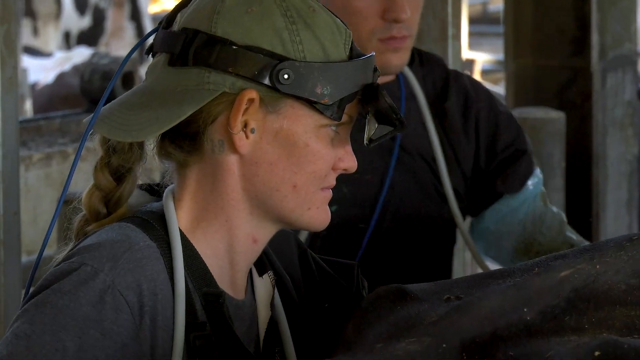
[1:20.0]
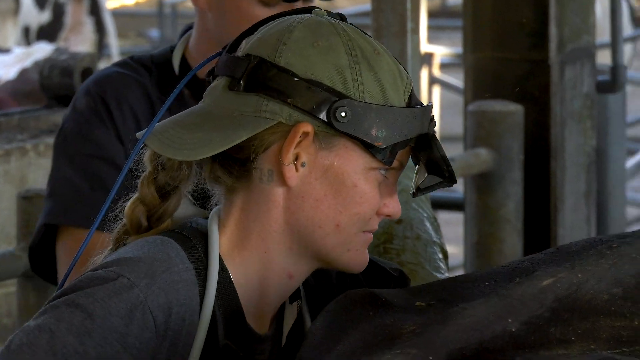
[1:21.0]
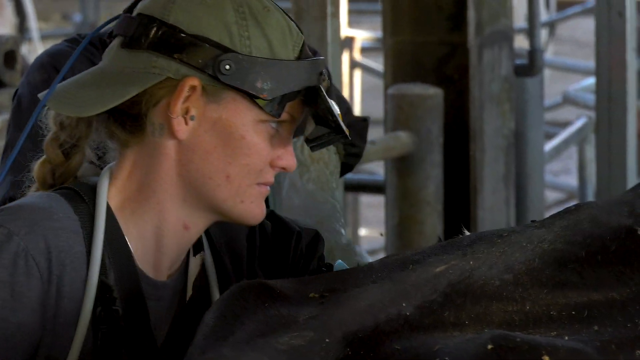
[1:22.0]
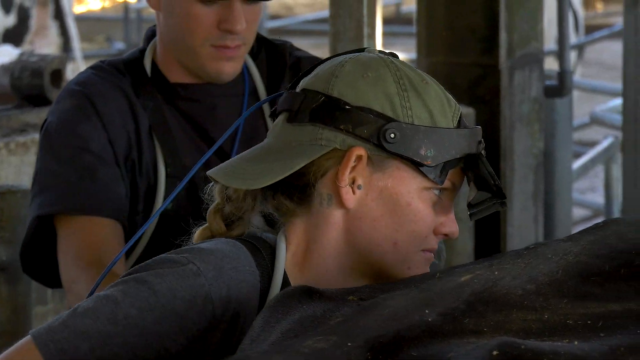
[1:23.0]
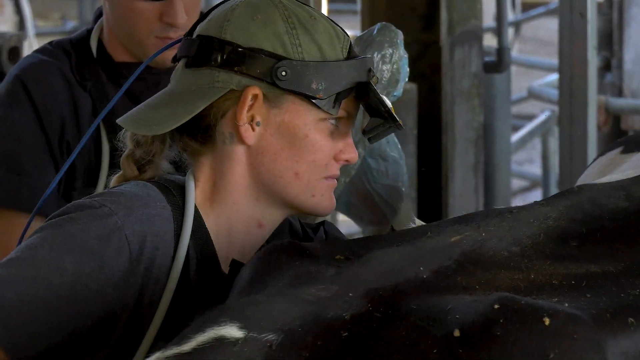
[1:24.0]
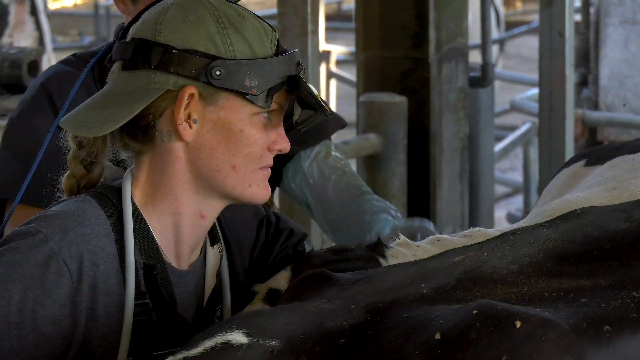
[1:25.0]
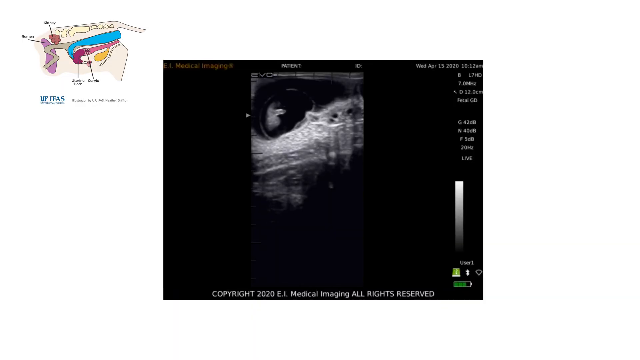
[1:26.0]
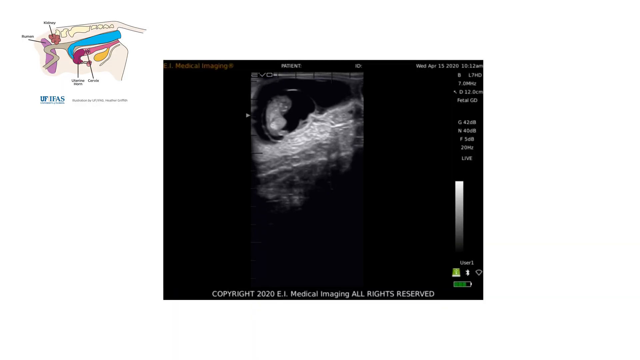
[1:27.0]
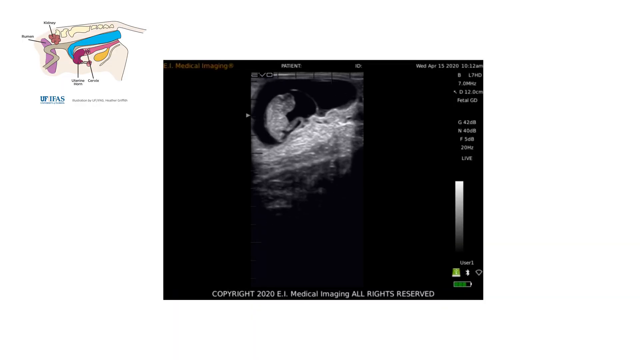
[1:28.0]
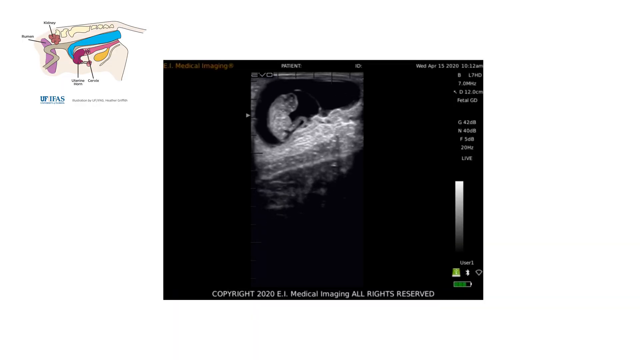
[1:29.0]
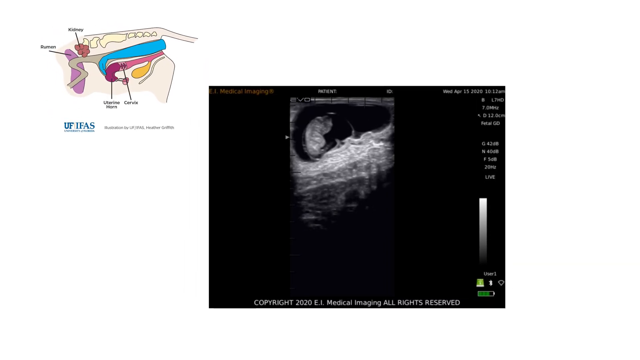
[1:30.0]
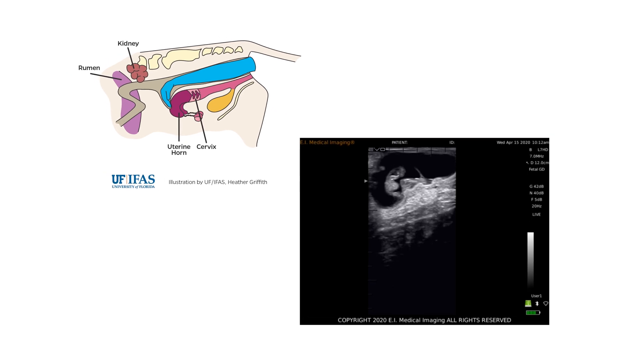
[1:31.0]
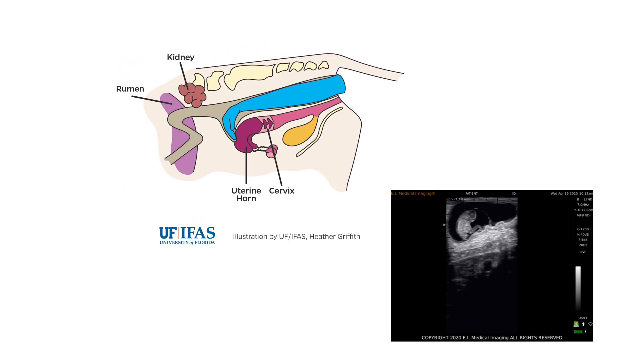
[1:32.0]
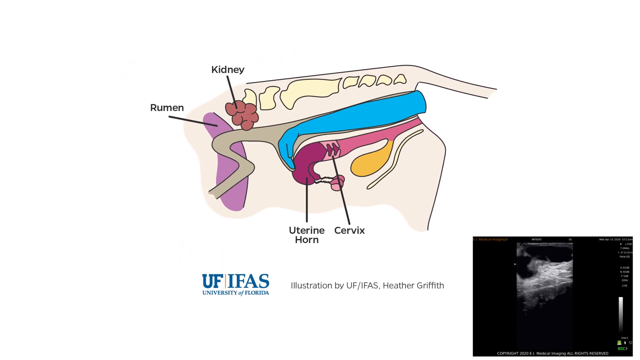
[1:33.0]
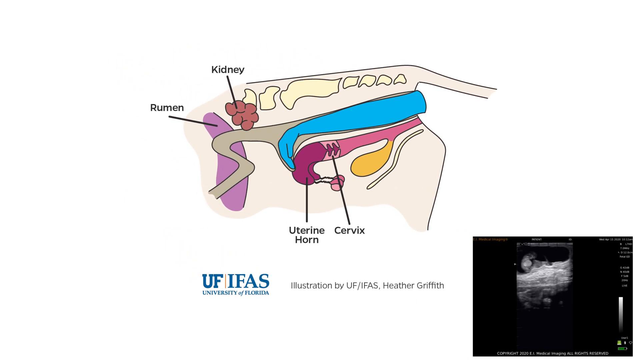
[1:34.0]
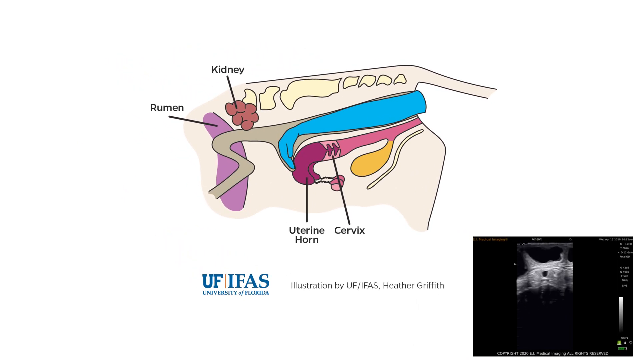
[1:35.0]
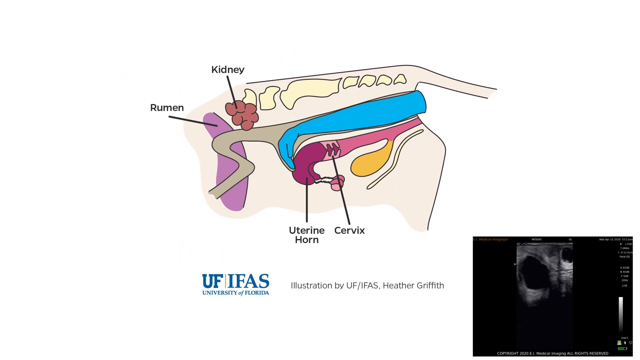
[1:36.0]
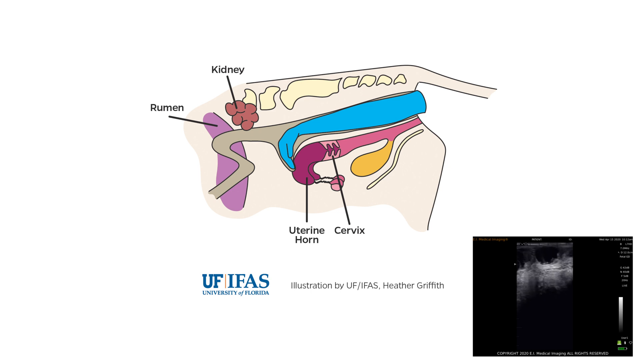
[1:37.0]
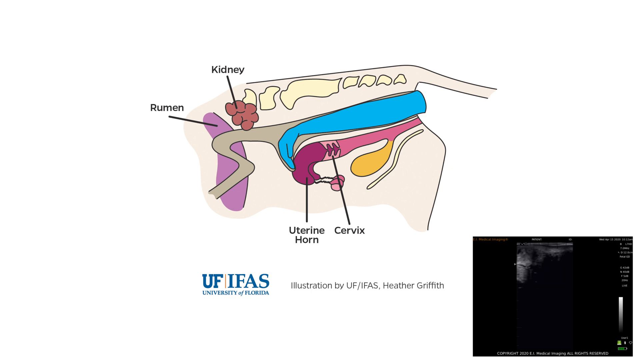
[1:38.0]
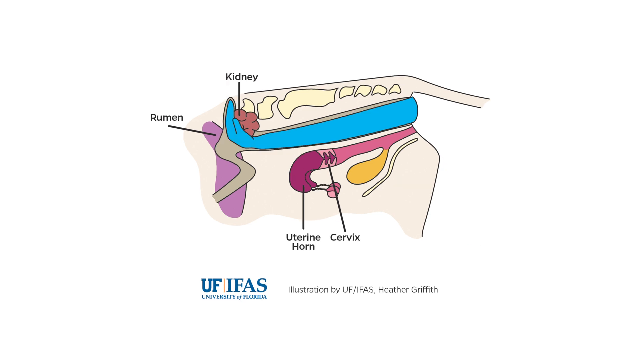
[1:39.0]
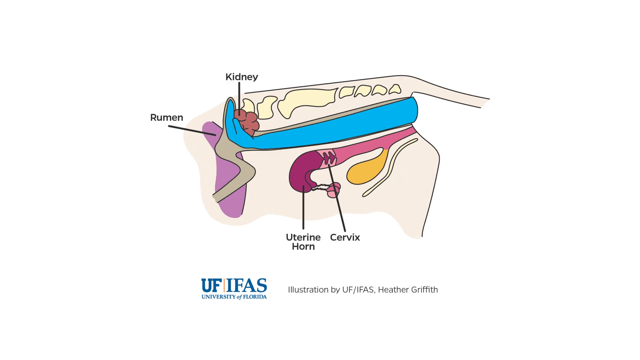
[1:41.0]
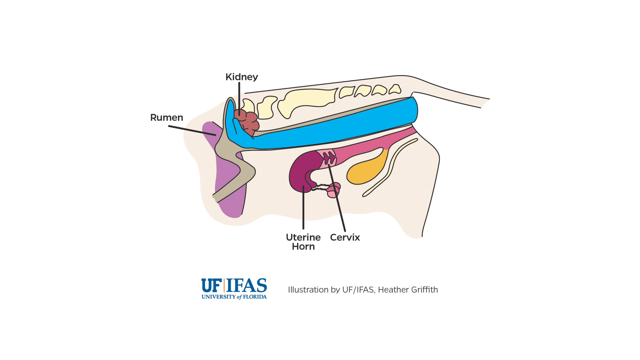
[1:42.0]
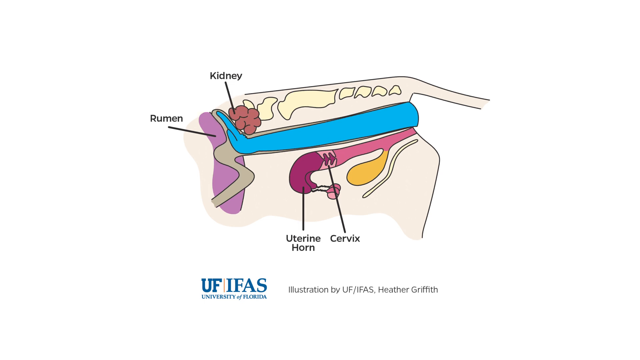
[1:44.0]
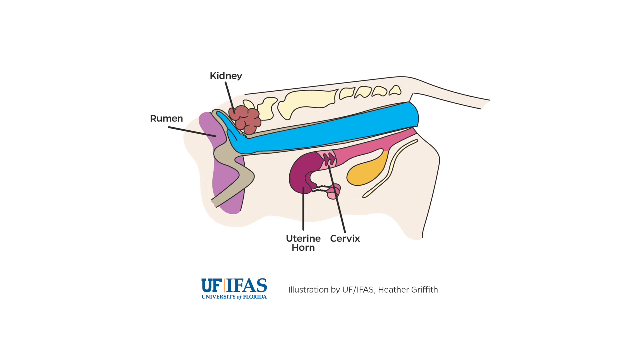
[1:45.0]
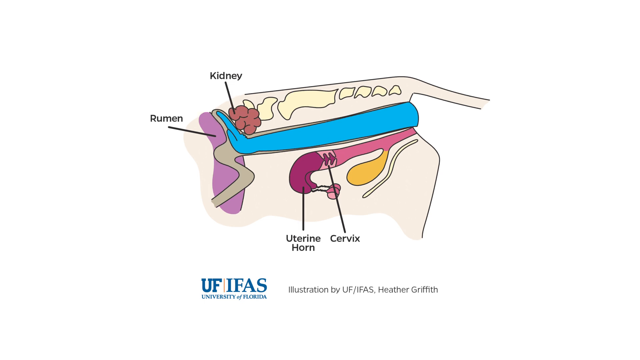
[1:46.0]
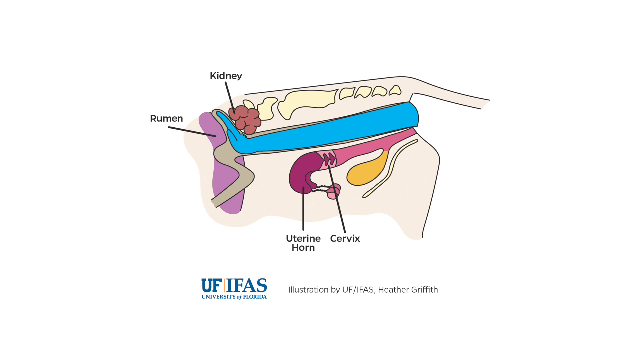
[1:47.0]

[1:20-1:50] Alexandra pushes the device further into the cow; a camera is attached to it so she can see inside. A diagram appears labeling the uterine horn, the cervix, the rumen and the kidney, showing which part of the cow's body they are in; it is an illustration by UF by Heather Griffith. She keeps pushing the probe further in while footage from inside the cow is shown on a screen on the side. A few ranchers are in the background. The pace is steady as the workers go through the cows.